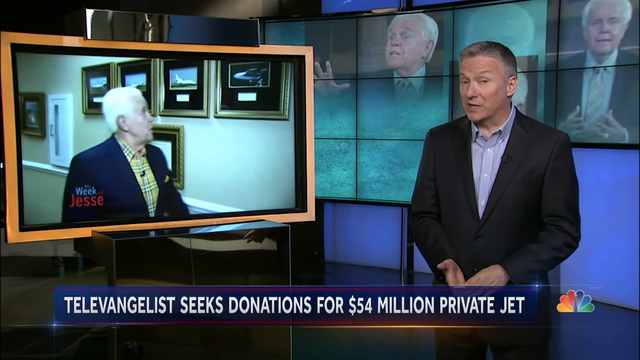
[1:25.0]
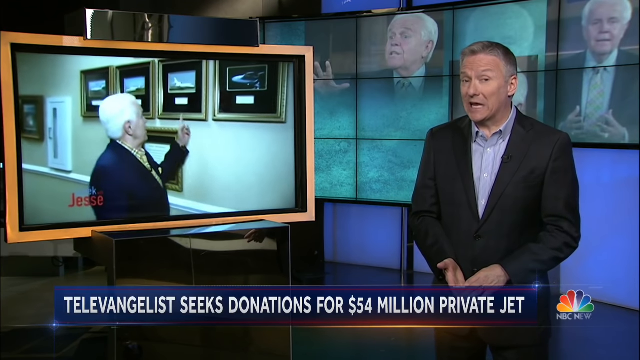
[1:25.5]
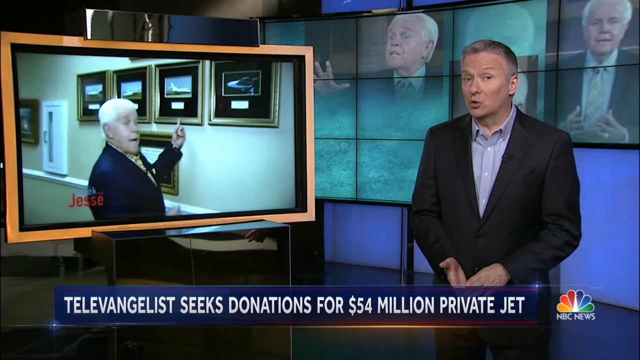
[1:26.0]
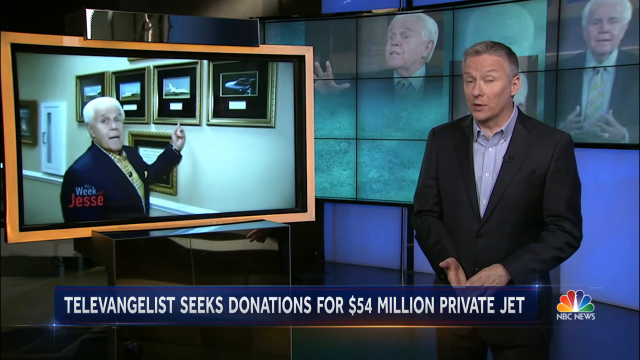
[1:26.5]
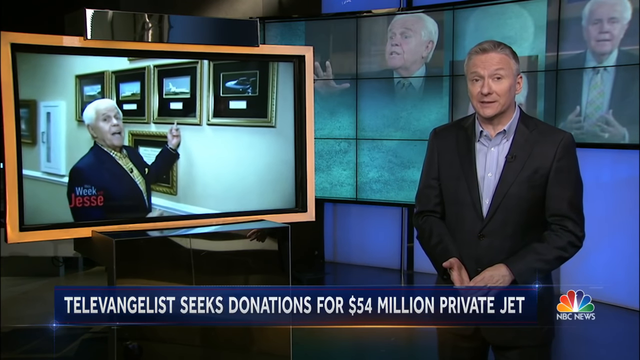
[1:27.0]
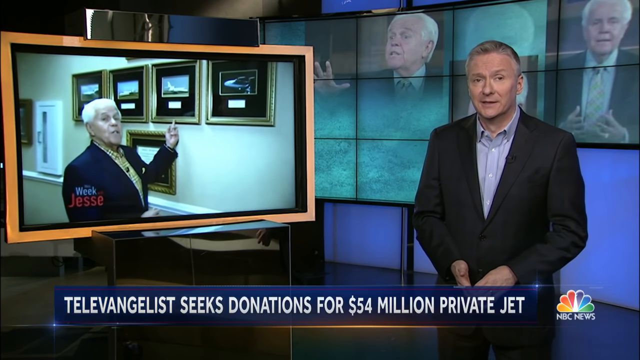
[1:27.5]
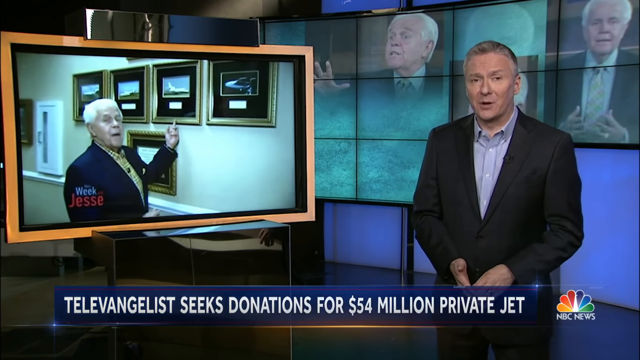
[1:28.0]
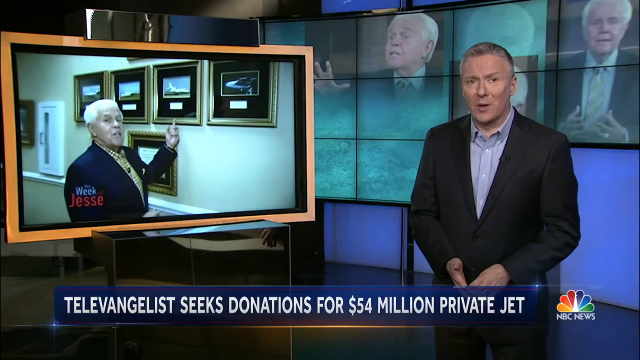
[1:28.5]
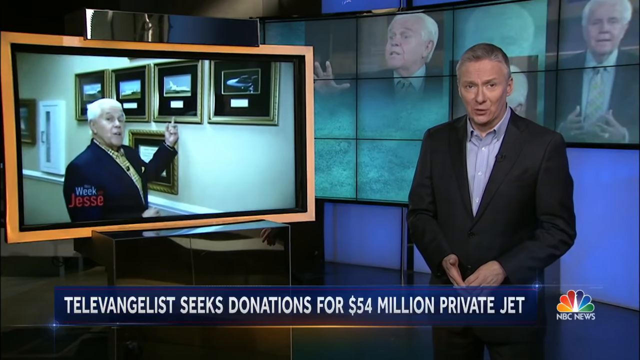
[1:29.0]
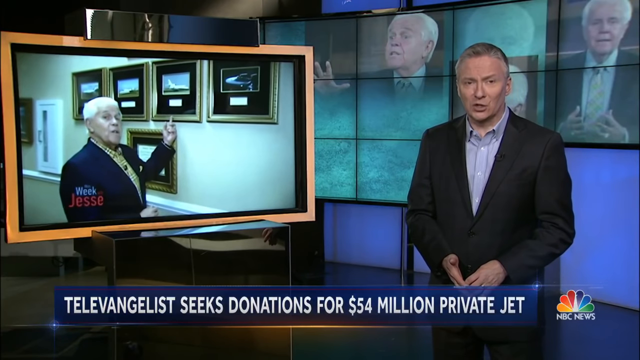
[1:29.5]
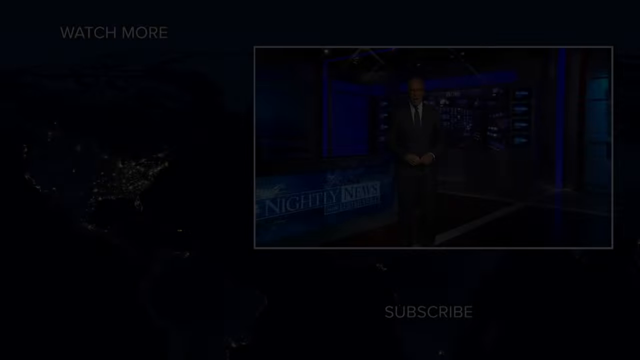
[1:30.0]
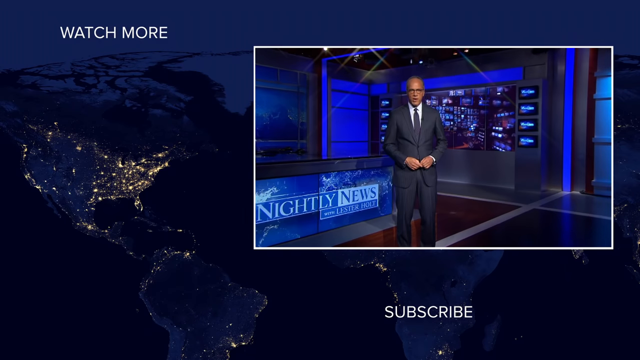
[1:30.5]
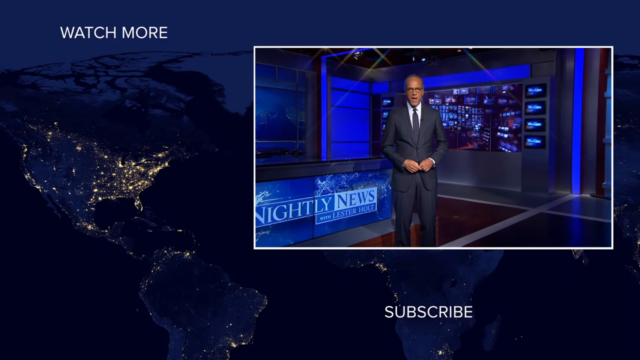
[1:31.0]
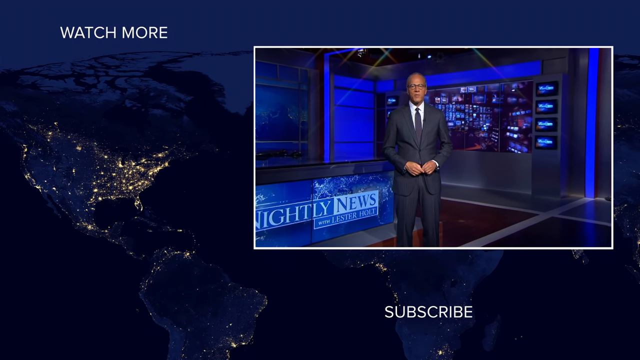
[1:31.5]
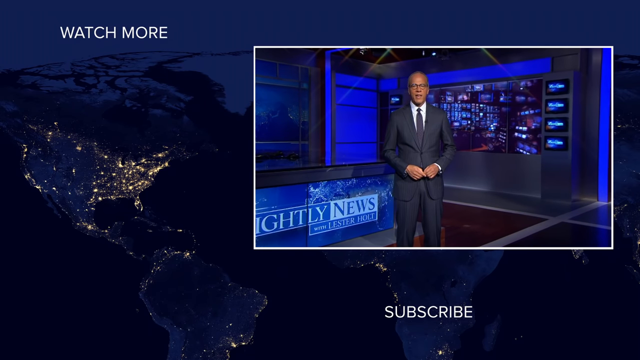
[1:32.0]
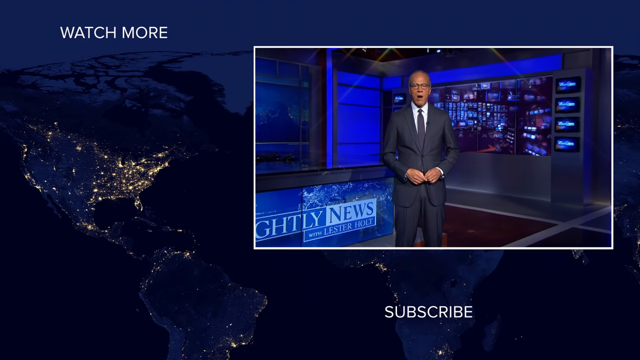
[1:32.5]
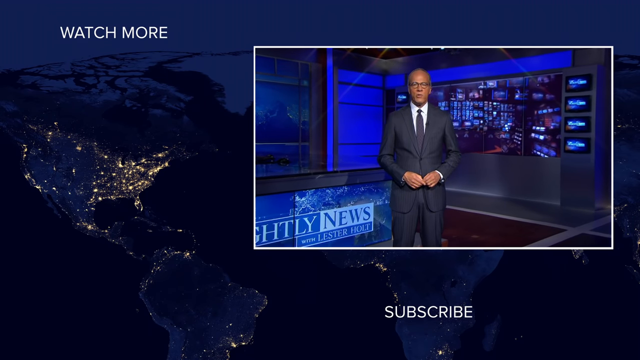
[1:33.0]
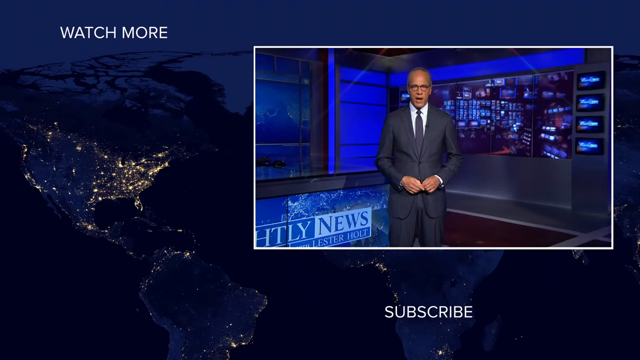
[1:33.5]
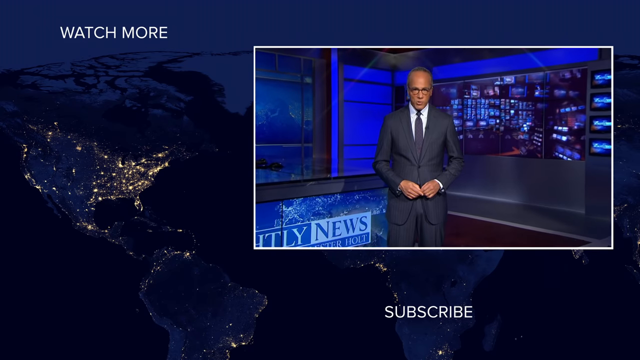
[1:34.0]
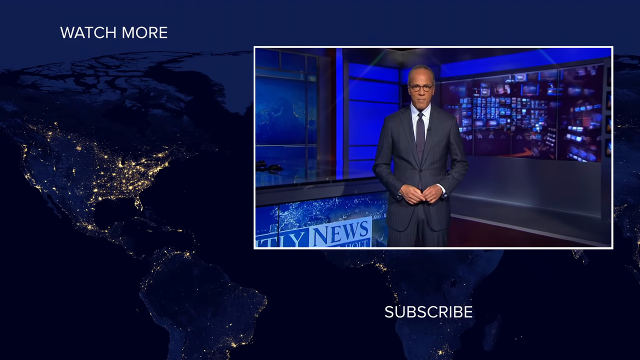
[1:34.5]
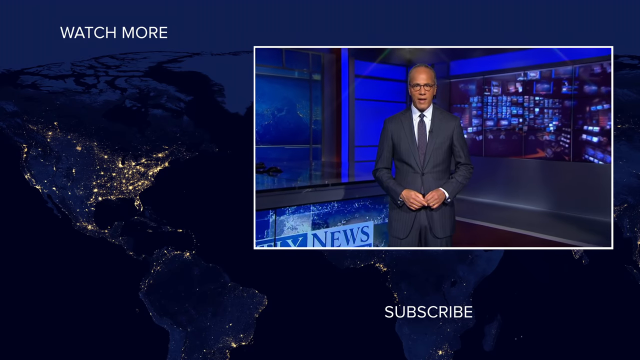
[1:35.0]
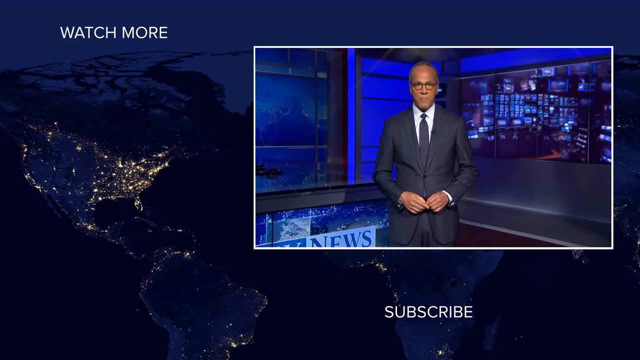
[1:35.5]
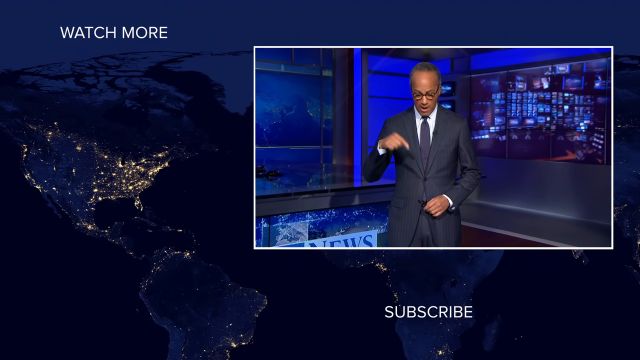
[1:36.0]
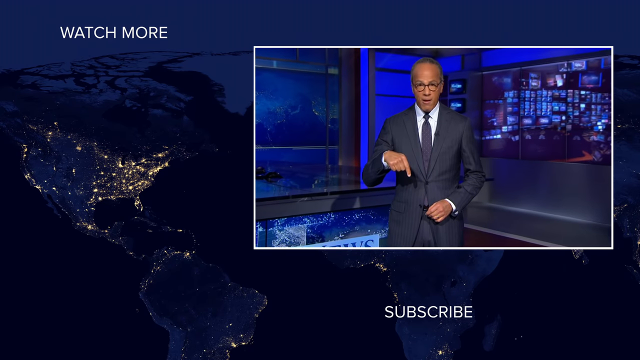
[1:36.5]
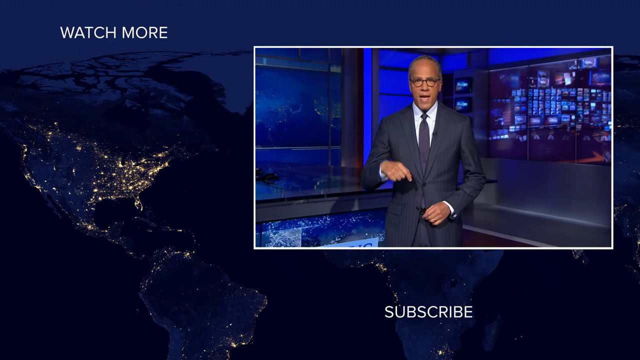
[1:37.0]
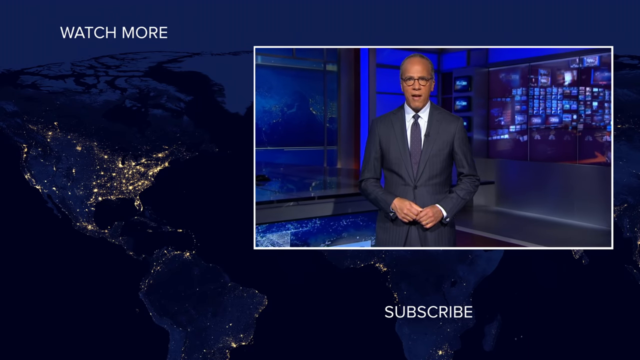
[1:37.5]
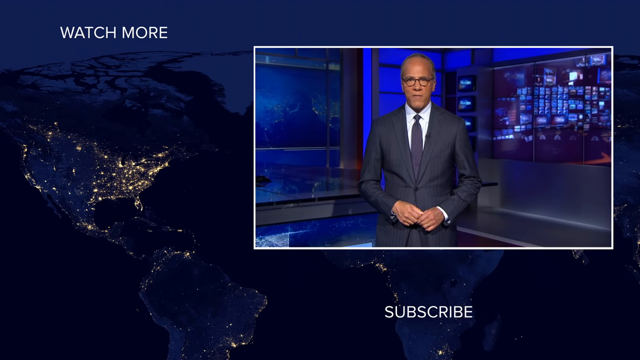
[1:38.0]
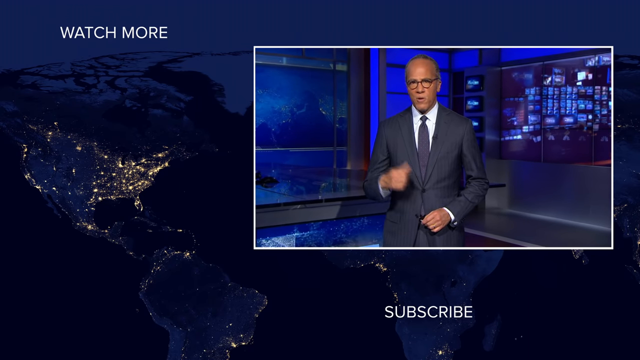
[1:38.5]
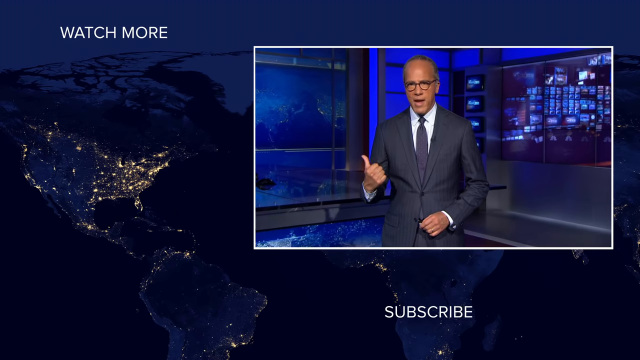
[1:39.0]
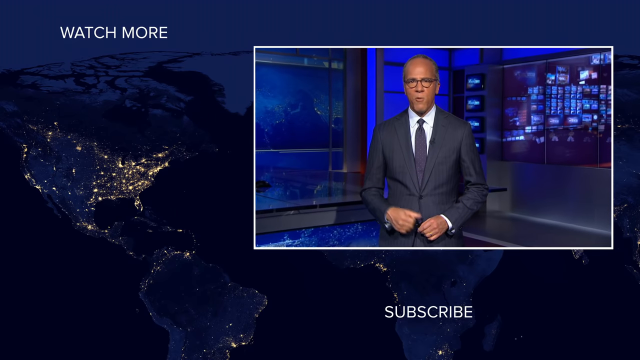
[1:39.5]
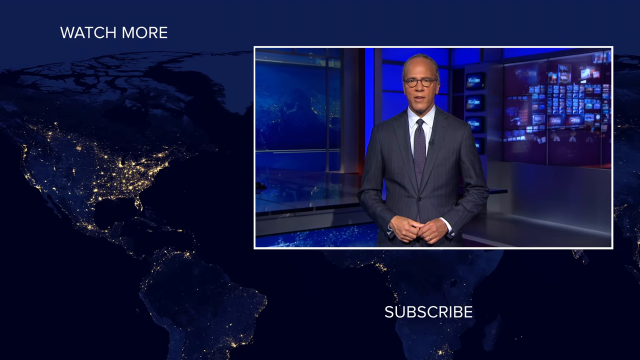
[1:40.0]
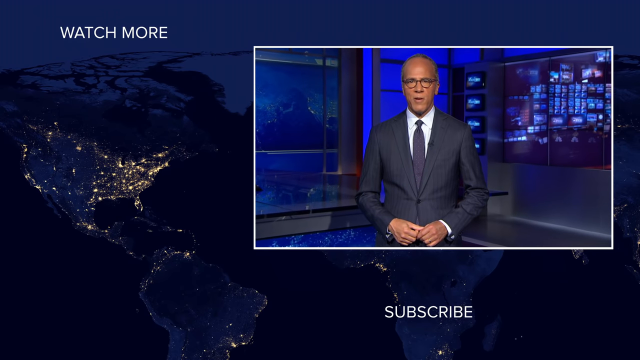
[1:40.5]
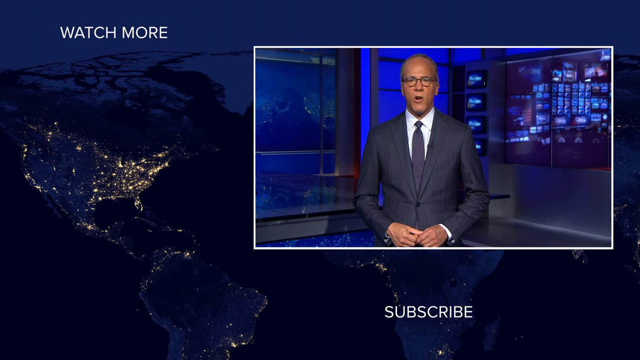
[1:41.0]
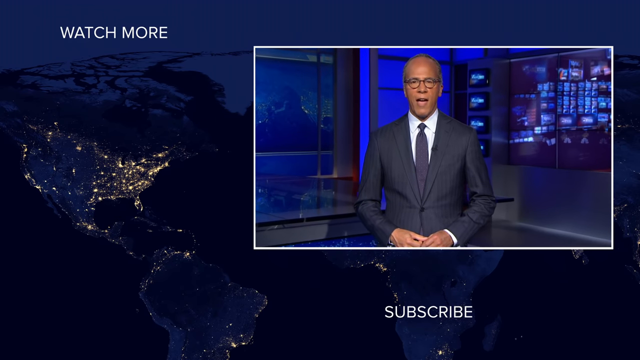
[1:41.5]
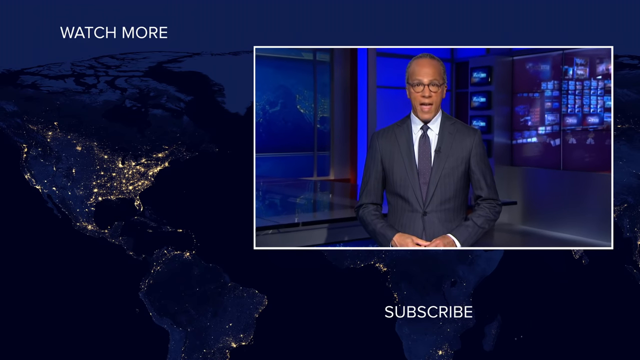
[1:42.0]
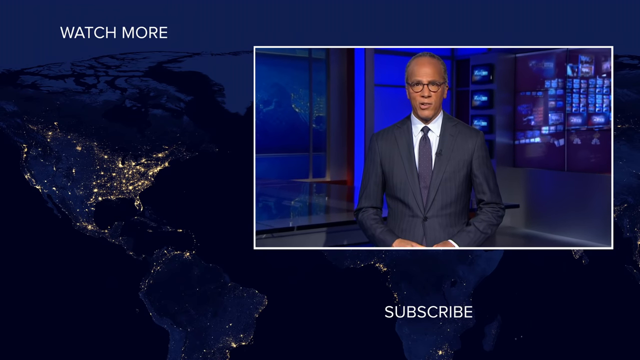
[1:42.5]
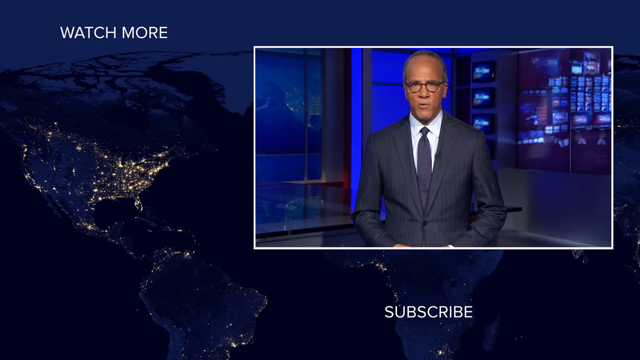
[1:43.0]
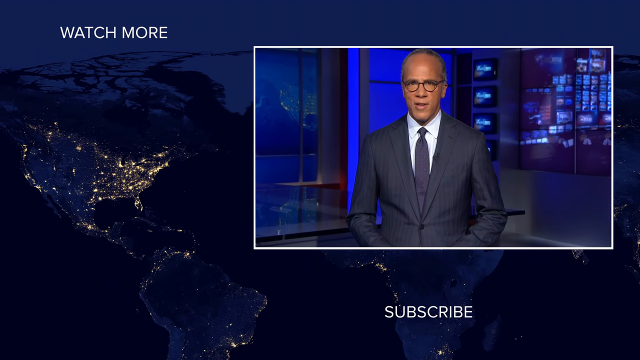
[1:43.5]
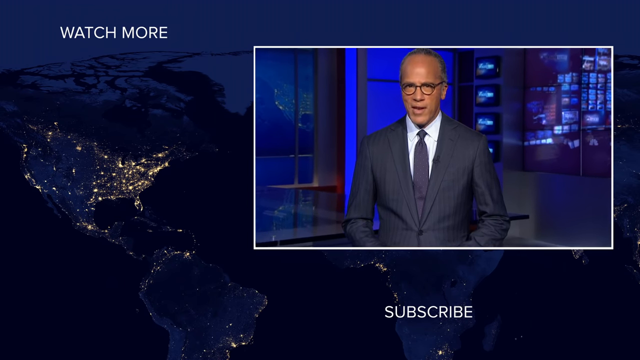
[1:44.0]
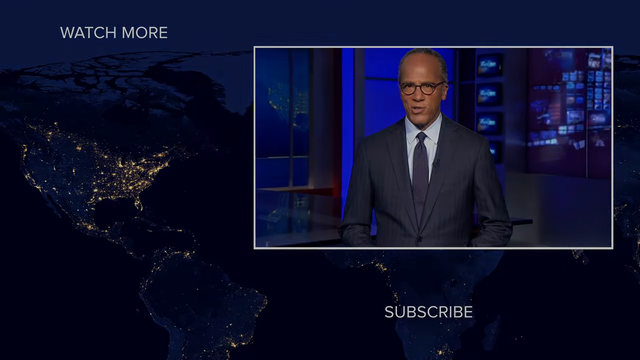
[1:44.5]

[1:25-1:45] A reporter appears, with a screen in the background showing the televangelist pointing to the pictures on the wall. The video switches to another screen with two stories highlighted down the side and a different reporter, with the newsroom and its cameras behind him. One story reads "Putin agrees to partial ceasefire"; the other is about NASA astronauts' splashdown on Earth. The highlighted reporter is behind an NBC News logo and wears a dark grey suit, a grey tie, a white shirt and glasses. There is no closed captioning. At the top are buttons for info and to share the video, and there is an option to watch later.